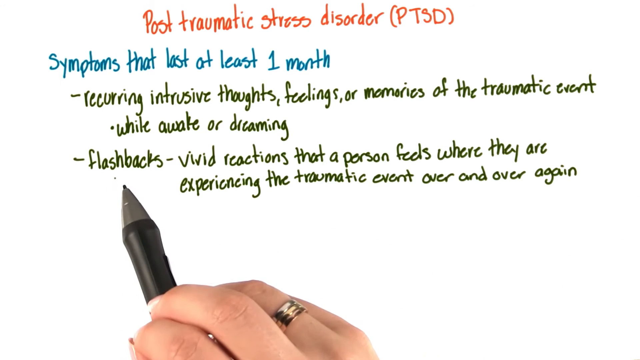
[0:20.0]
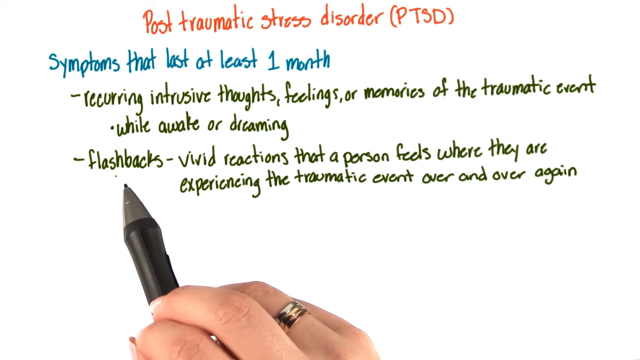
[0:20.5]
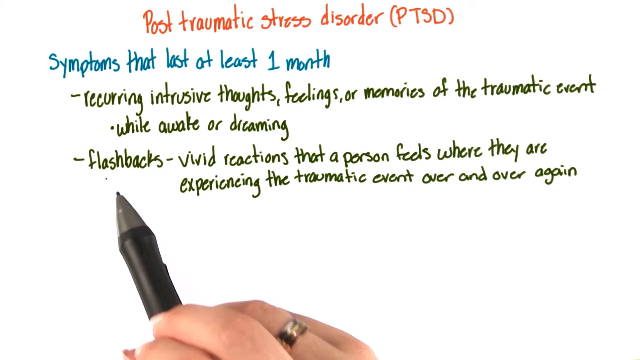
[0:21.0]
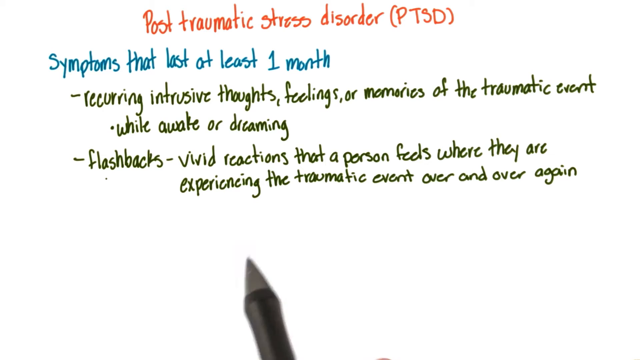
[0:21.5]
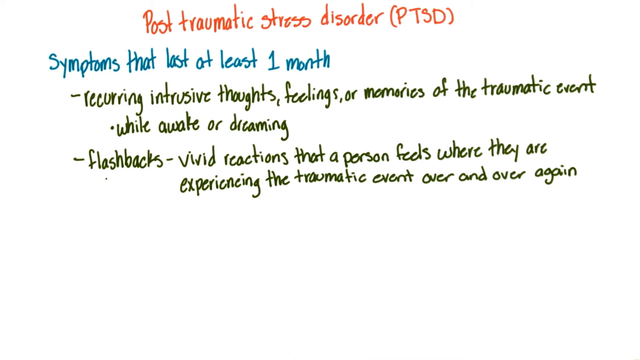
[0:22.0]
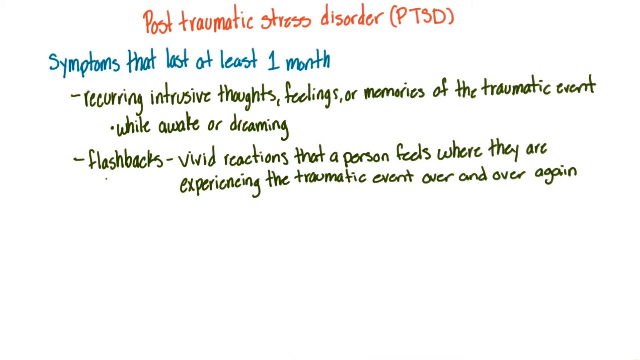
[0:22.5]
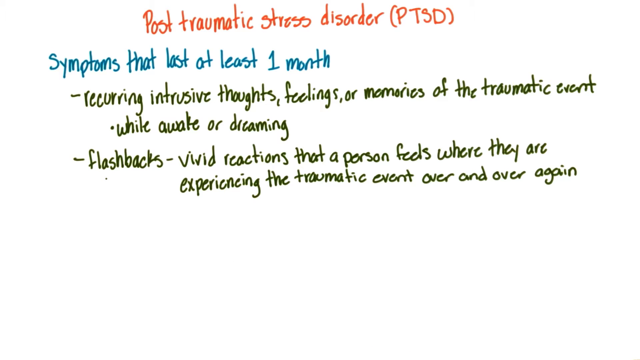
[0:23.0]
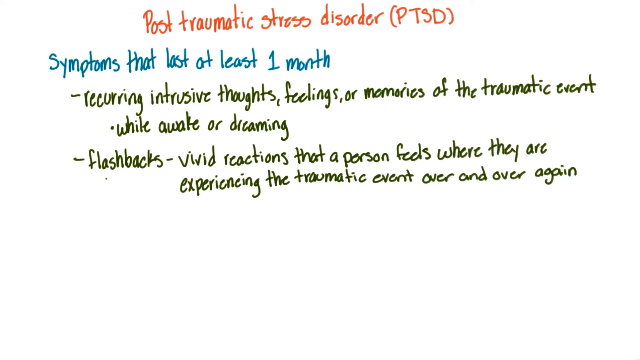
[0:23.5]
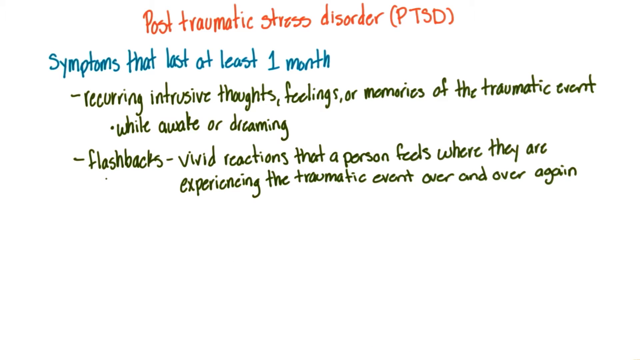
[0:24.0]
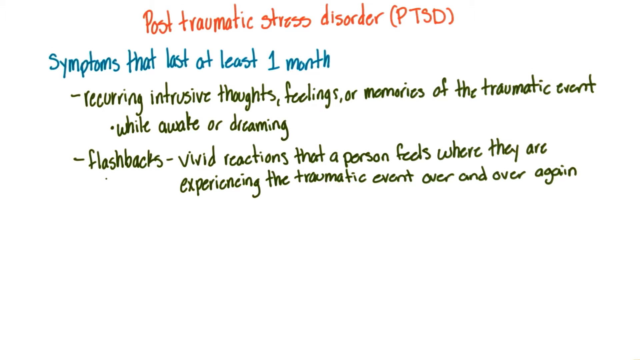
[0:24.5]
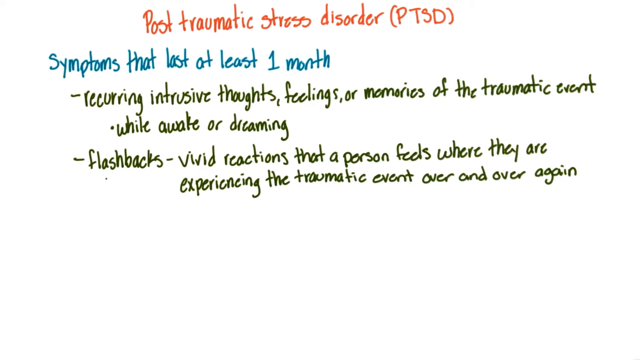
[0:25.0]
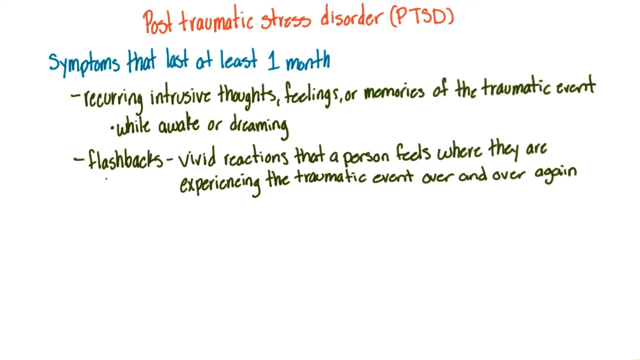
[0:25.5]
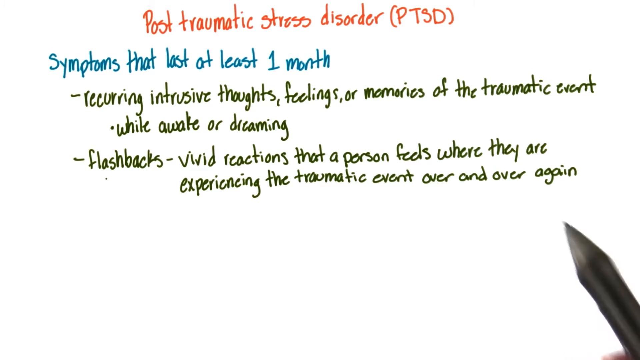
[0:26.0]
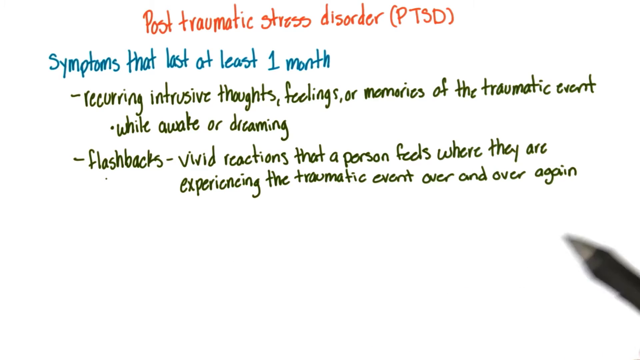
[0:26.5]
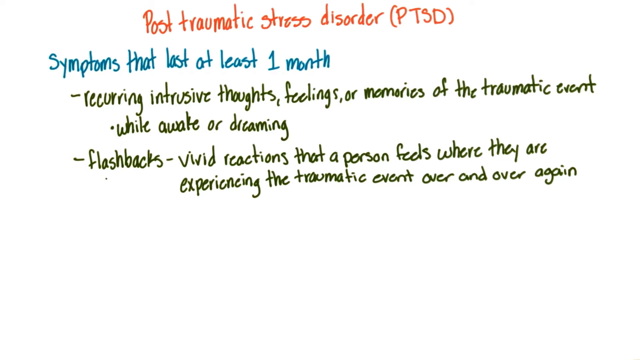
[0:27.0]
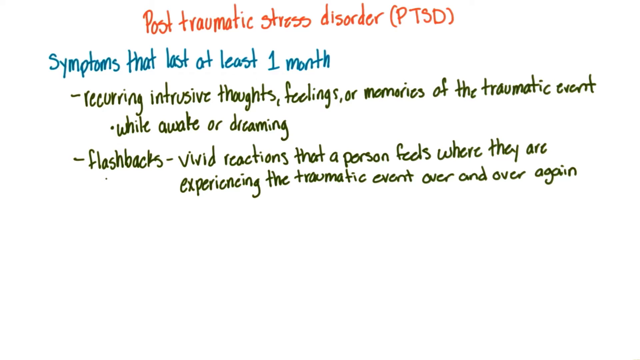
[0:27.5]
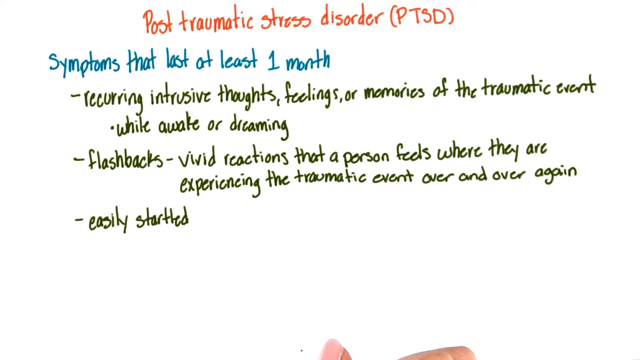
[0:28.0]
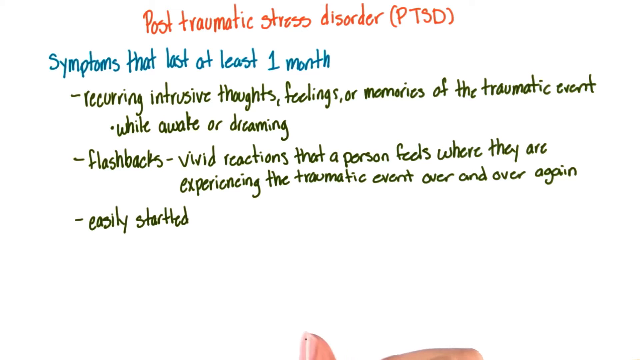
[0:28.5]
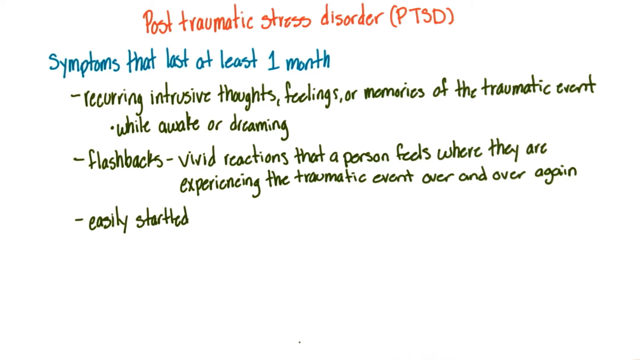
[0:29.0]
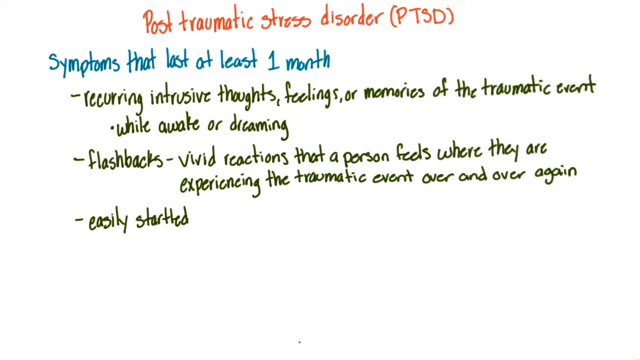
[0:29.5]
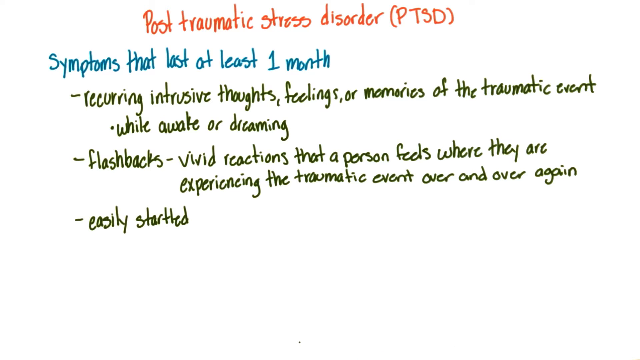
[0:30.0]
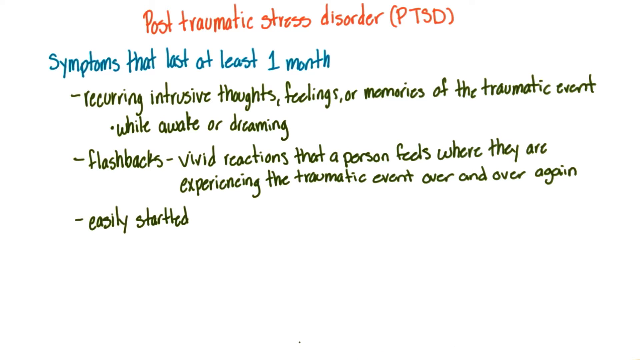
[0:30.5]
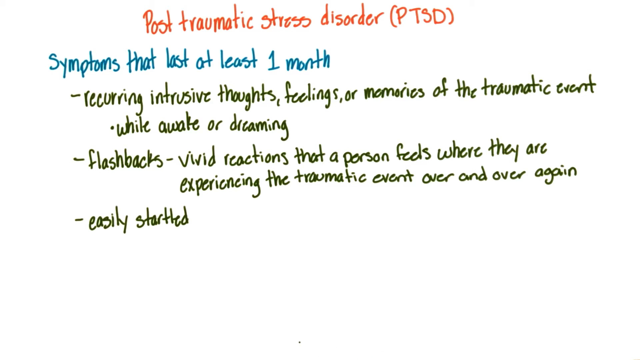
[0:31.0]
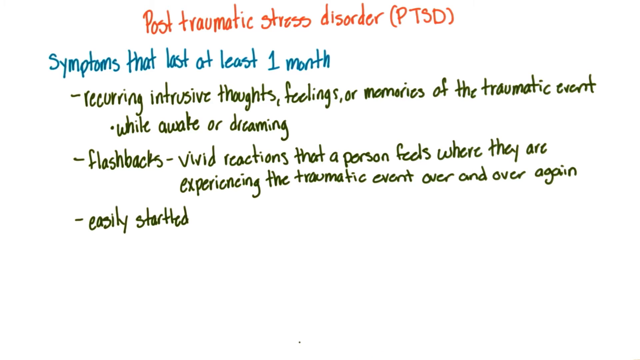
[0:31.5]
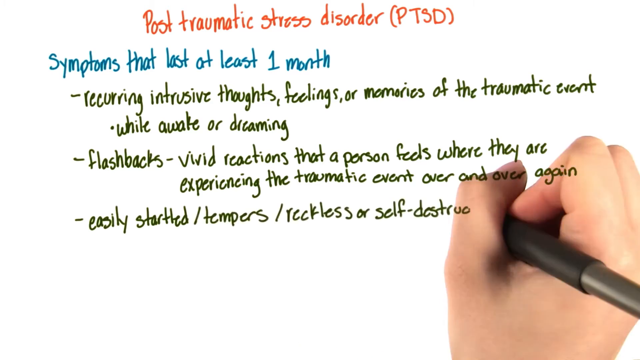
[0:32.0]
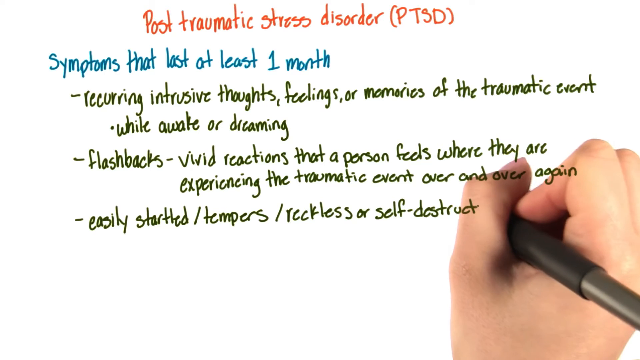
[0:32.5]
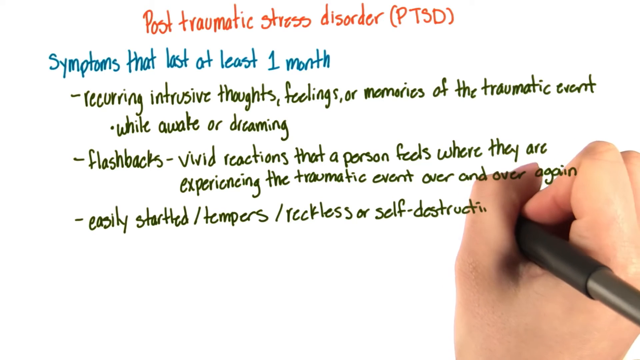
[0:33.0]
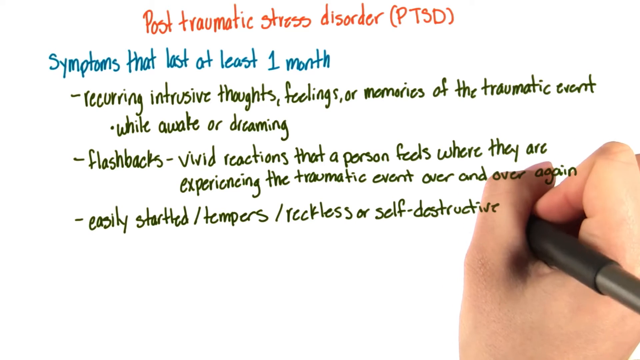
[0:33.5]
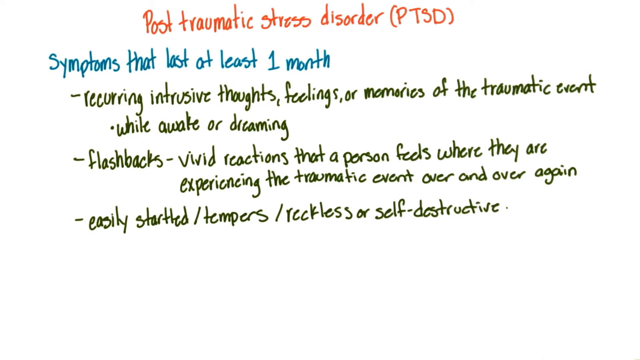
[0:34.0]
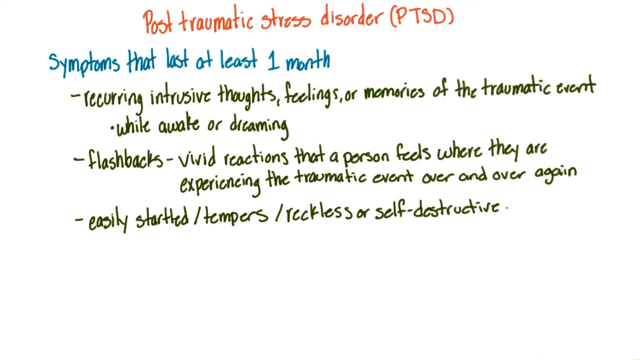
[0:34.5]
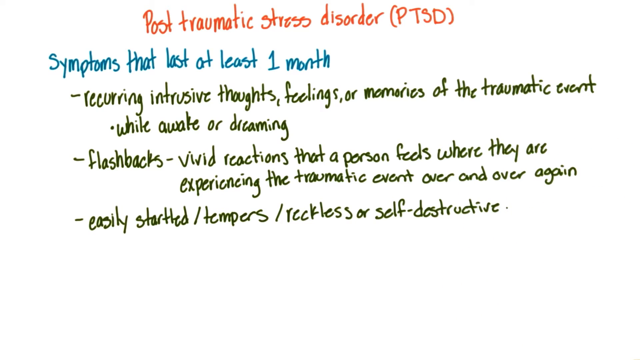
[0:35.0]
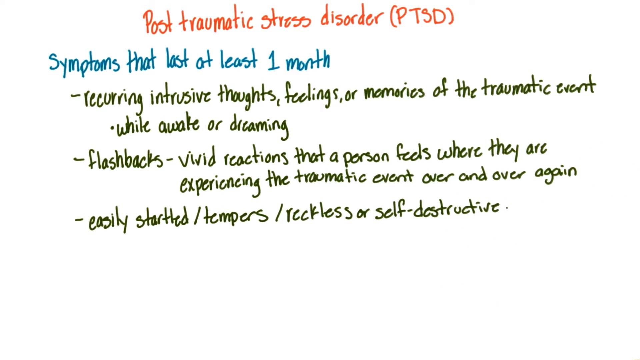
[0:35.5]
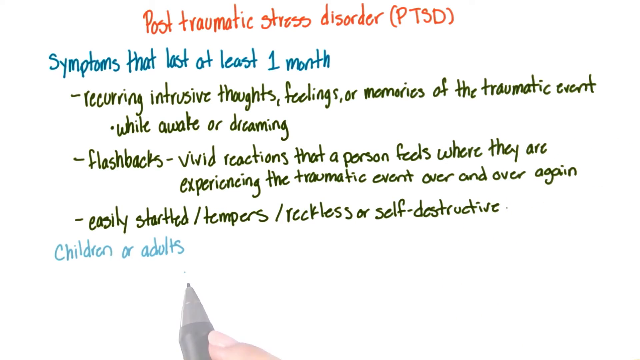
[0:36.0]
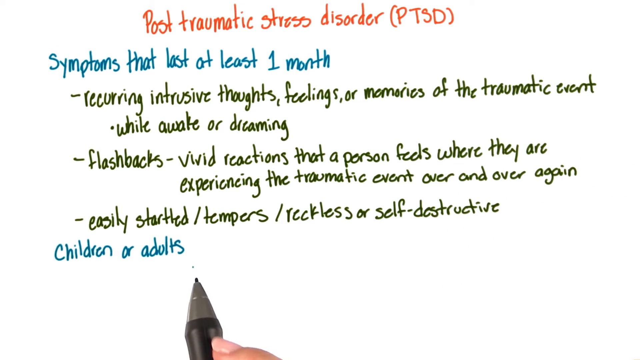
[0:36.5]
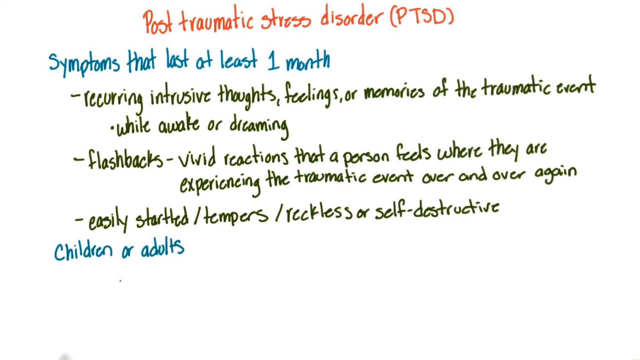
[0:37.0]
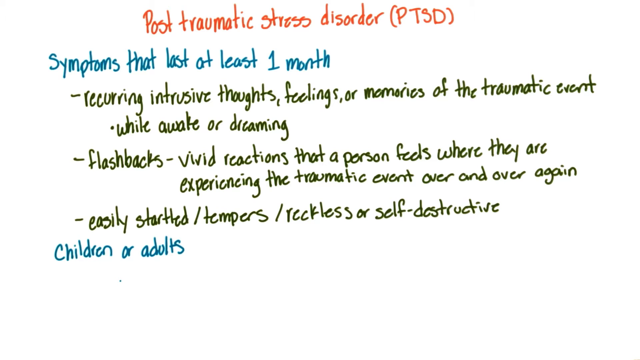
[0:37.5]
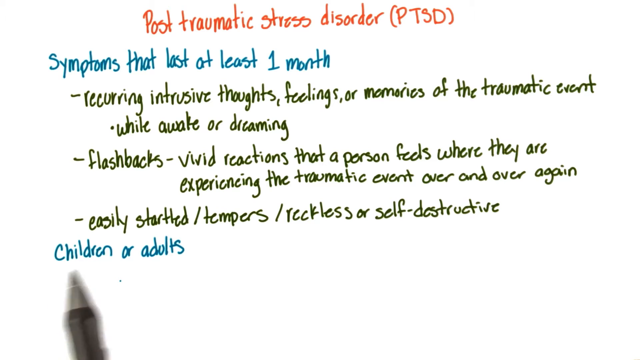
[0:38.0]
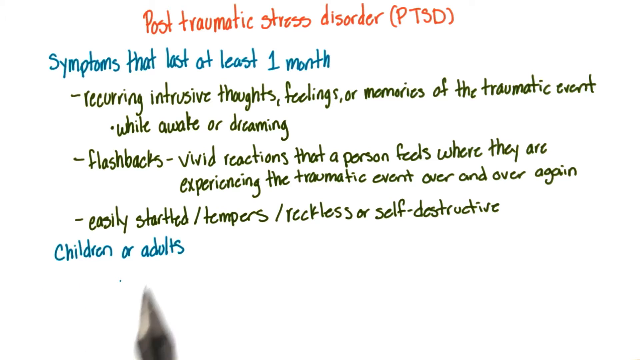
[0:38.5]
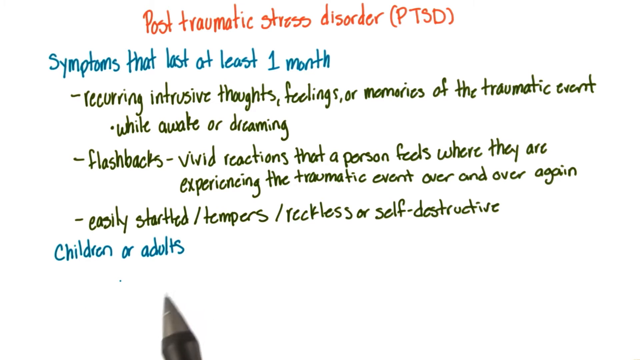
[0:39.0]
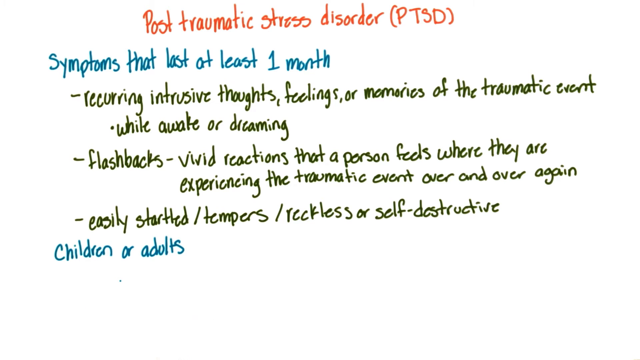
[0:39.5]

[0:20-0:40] Shifted back a little to the left, with a small dash beside it, new text appears; the writing is not actually shown, only its start and then the finished text, with the pen possibly shown on the right side as it ends. The text begins "flashback - vivid reactions" and continues underneath with "experiencing the traumatic event over and over again." The pen points toward "flashbacks." The hand, fingers and pen then go off the bottom, come up on the right side, and move off again. Below, over to the left, another dash appears with "easily started"; all of the dashes are lined up perfectly. The pen is shown at the end of the writing, with some of the words already written, and the line reads "- easily started/tempers/reckless, or self-destructive." The hand goes off the bottom. Beneath that, in blue and shifted to match the blue text at the top, the words "children or adults" appear as the pen points underneath them. Then there is a small dash and, in parentheses, "many veterans" in blue.